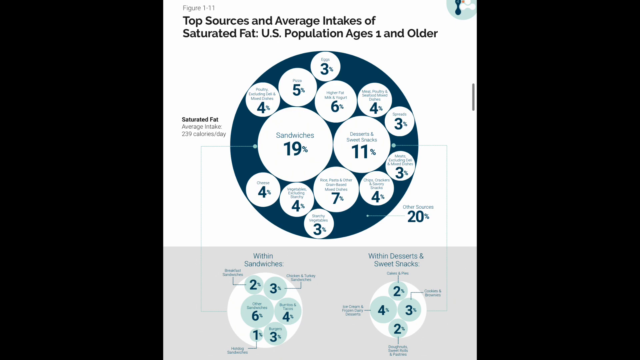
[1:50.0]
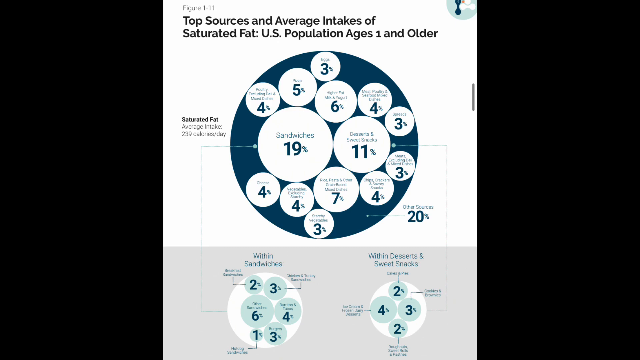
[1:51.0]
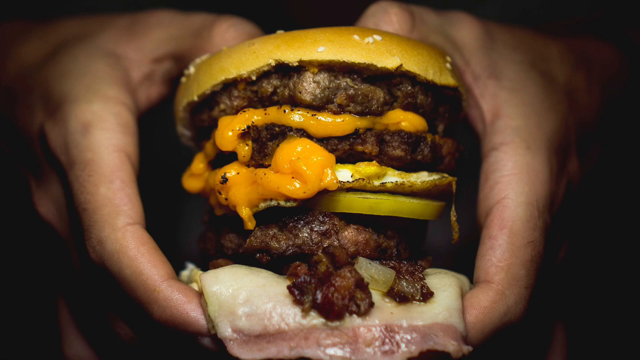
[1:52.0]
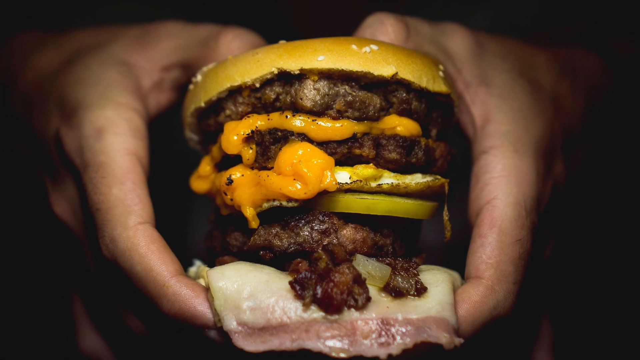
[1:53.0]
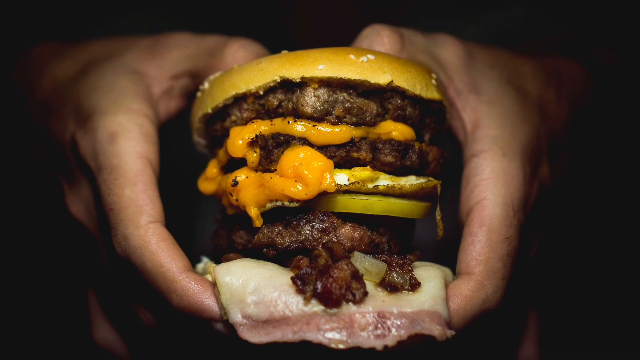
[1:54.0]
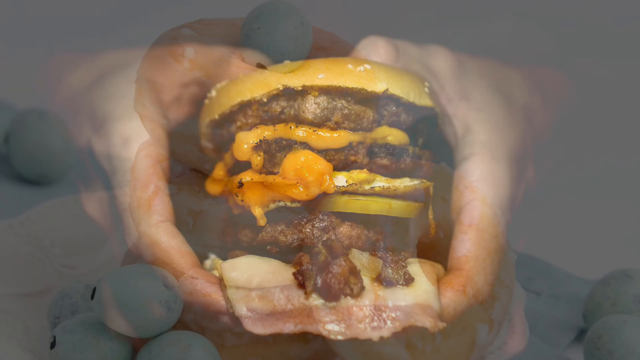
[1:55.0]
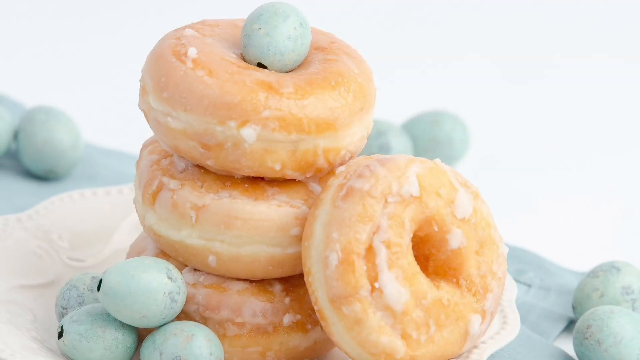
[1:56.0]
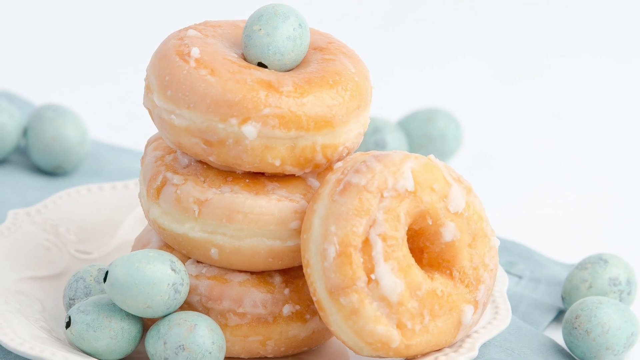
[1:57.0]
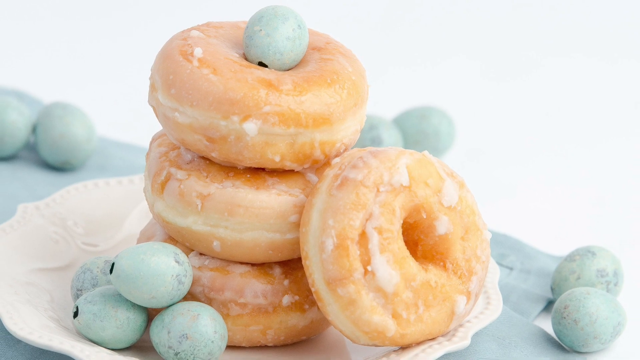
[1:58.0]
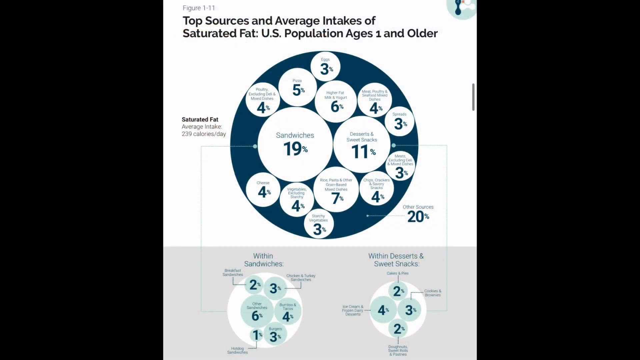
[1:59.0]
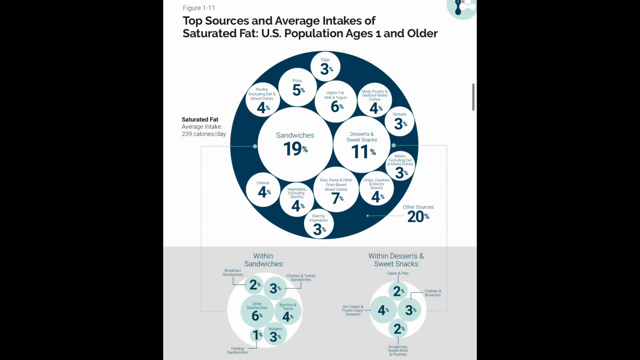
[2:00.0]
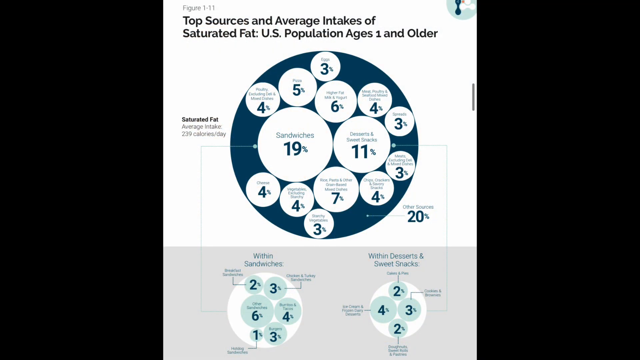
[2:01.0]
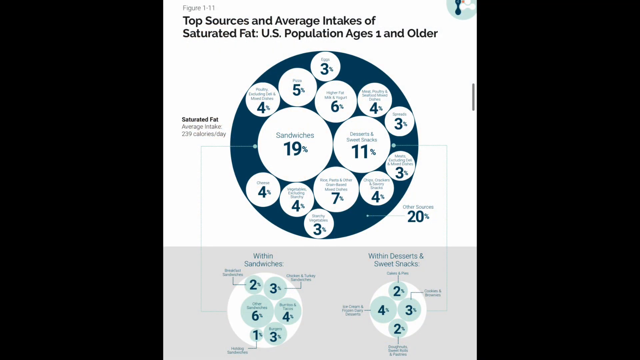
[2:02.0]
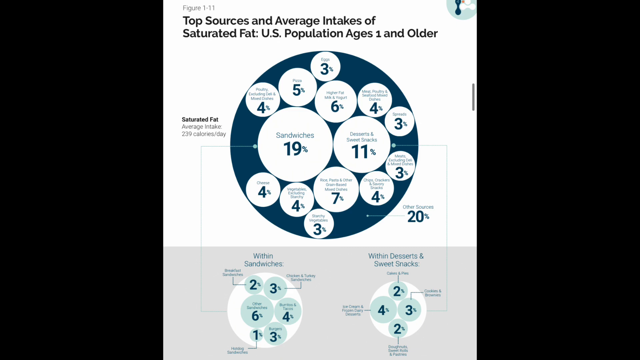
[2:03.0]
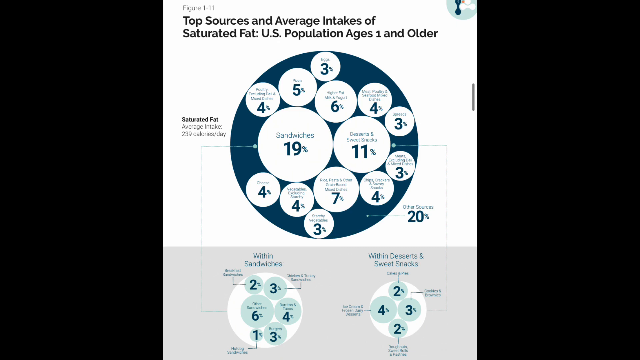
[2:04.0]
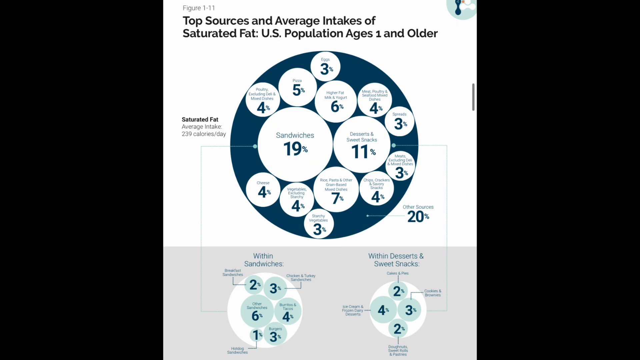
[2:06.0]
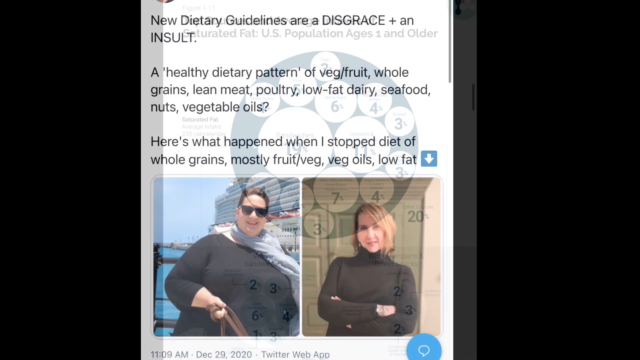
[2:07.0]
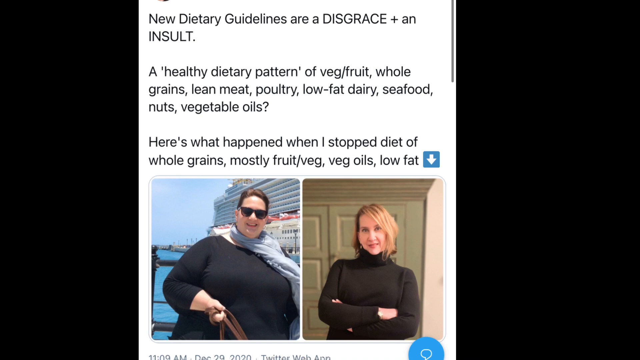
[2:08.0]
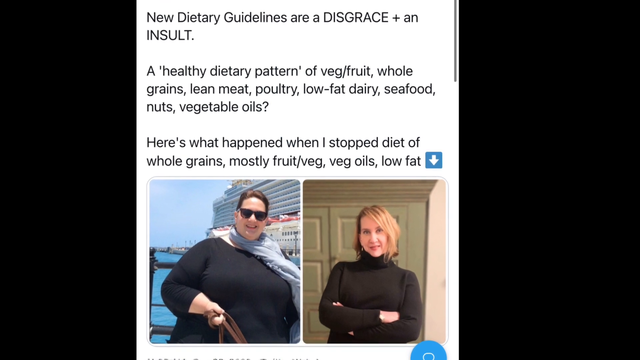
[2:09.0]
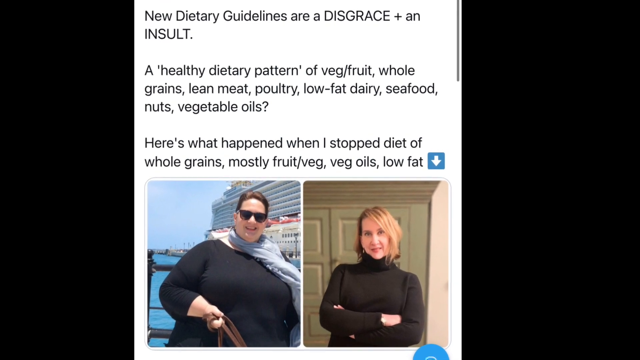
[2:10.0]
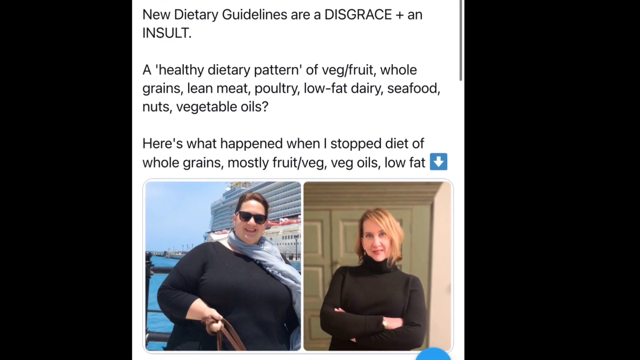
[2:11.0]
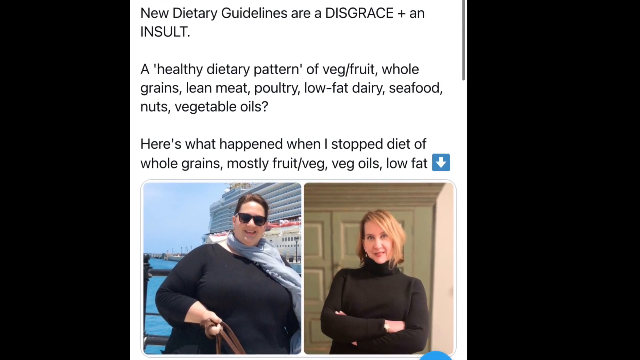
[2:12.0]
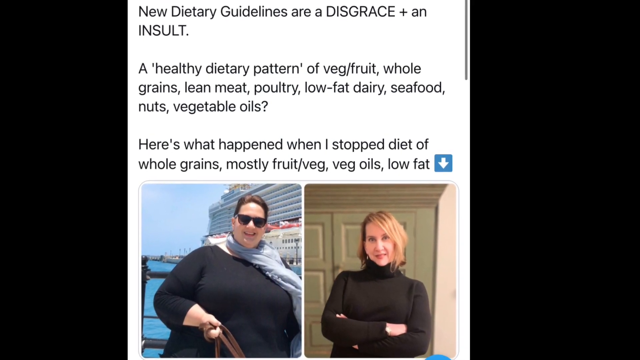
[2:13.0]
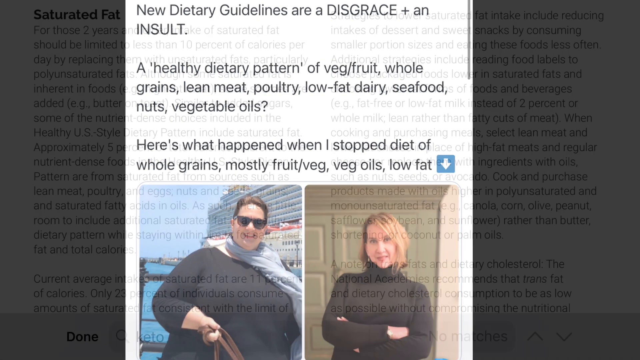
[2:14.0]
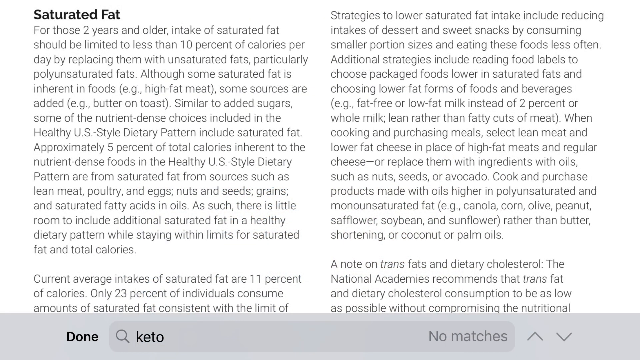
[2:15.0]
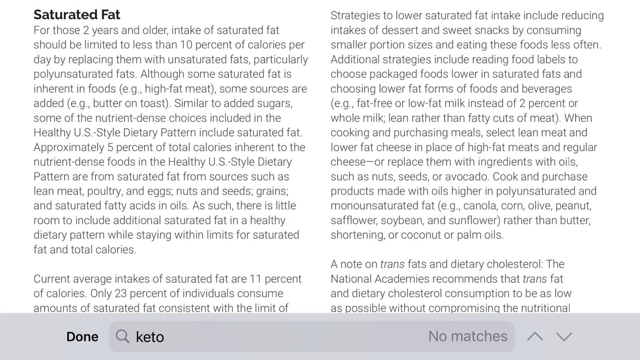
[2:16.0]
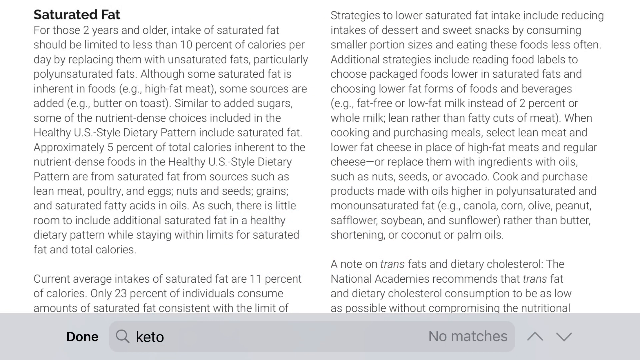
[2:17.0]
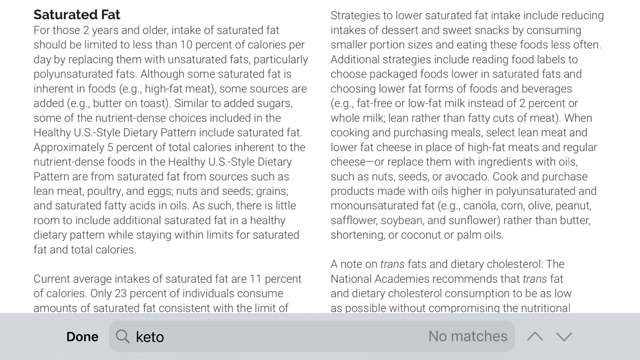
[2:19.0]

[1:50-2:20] A circle graph shows the amount and sources of saturated fats for the U.S. population ages one and older: a large circle with 14 smaller circles inside it, the largest stating that 19% of saturated fat comes from sandwiches. Next, someone holds a triple-decker cheeseburger with two hands. Then a stack of three glazed doughnuts appears, with another one leaning against the stack. The video returns to the chart of saturated fat intake for Americans ages 1 and older. That is followed by side-by-side pictures of a woman: on the left she is quite large and overweight, and on the right she is crossing her arms and is much slimmer. Text at the top states "new dietary guidelines are a disgrace and insult. A healthy dietary pattern of vegetable, fruit, whole grains, lean meat, poultry, low-fat dairy, seafood, nuts, vegetable oils," followed by "Here's what happened when I stopped diet of whole grains, mostly fruit, vegetables, veg oils, and low-fat," with the pictures displayed underneath that comment. The shot ends with the guidelines on saturated fat again for those ages two years and older.